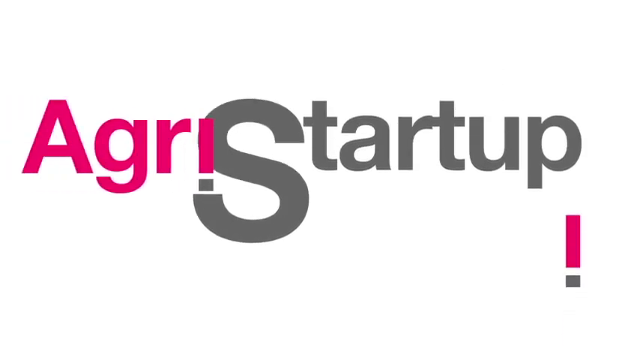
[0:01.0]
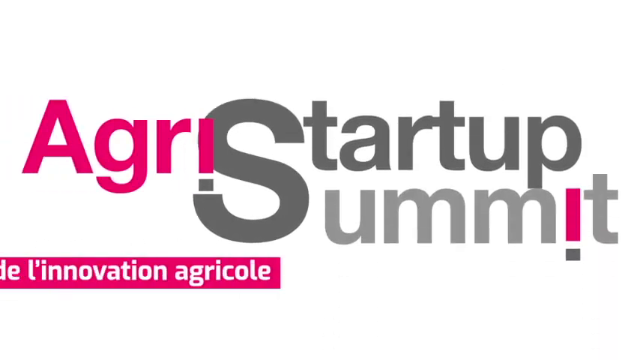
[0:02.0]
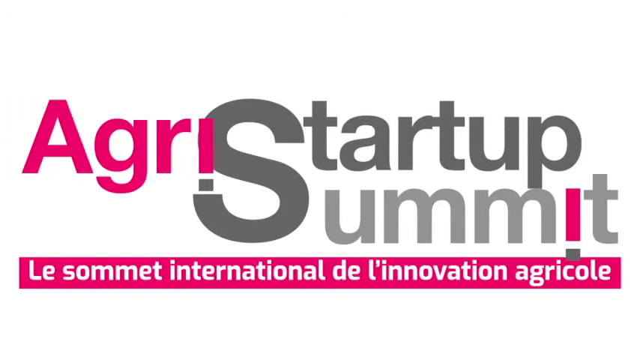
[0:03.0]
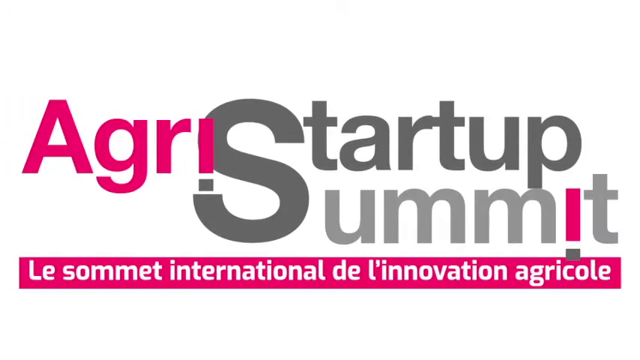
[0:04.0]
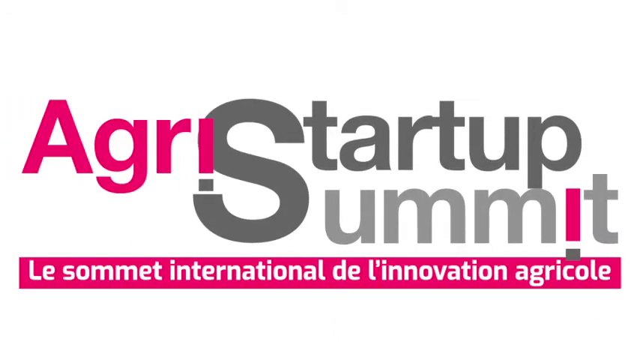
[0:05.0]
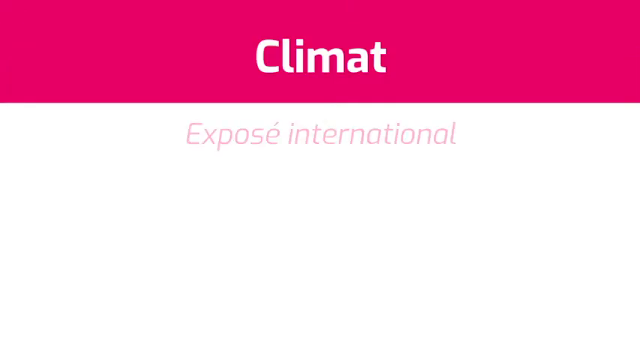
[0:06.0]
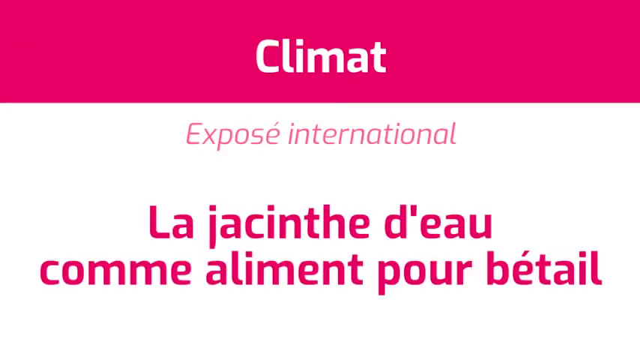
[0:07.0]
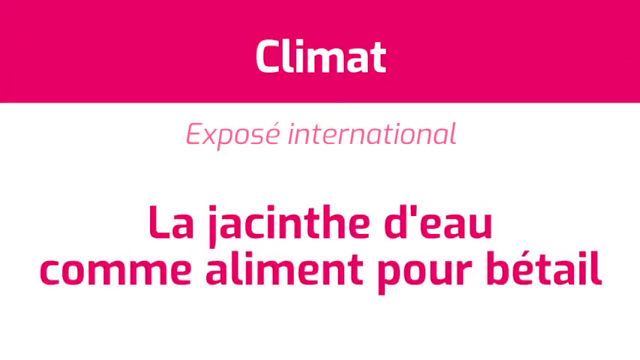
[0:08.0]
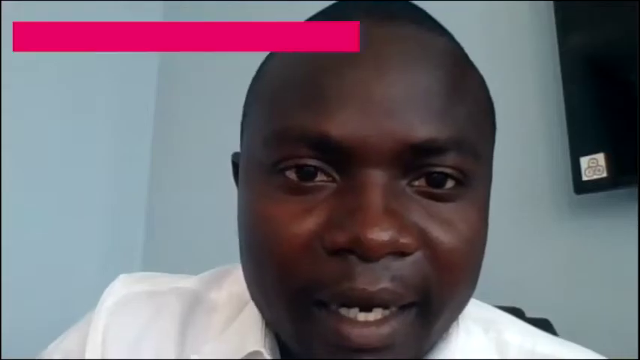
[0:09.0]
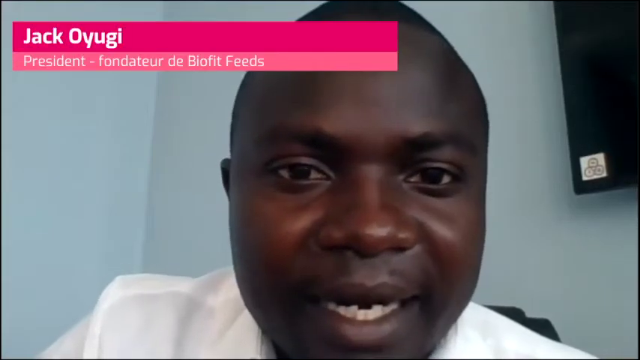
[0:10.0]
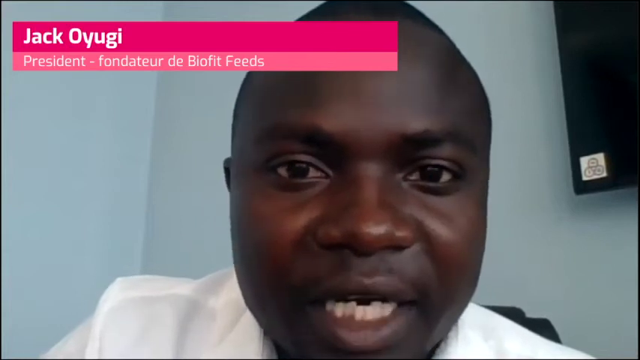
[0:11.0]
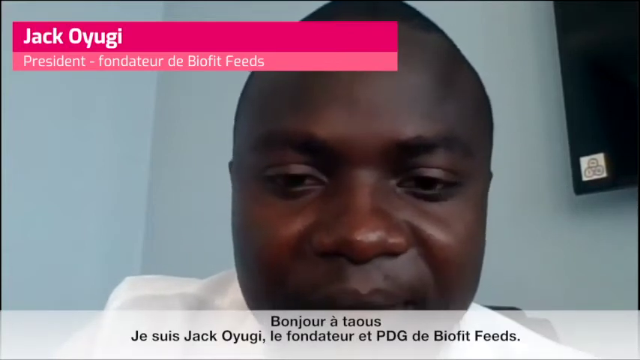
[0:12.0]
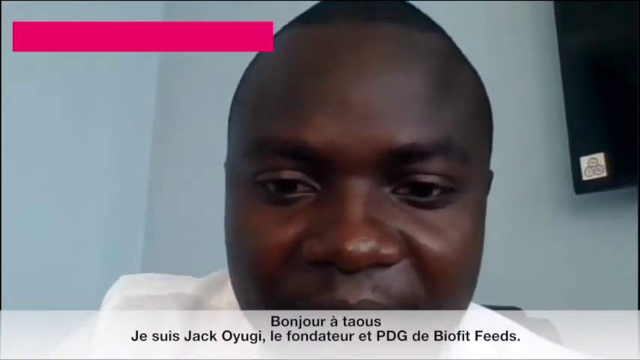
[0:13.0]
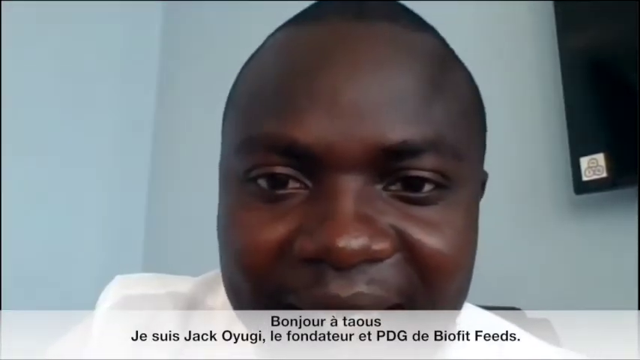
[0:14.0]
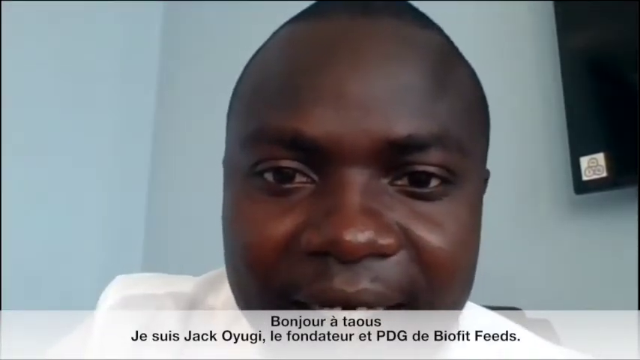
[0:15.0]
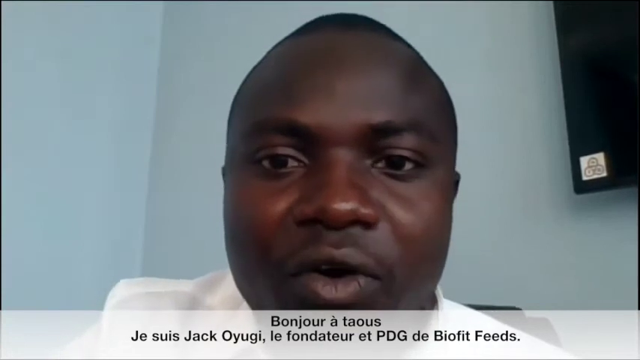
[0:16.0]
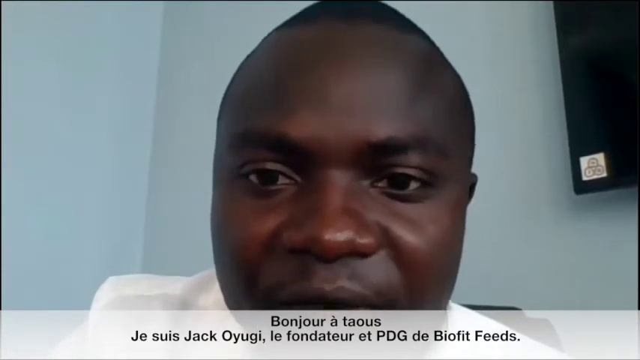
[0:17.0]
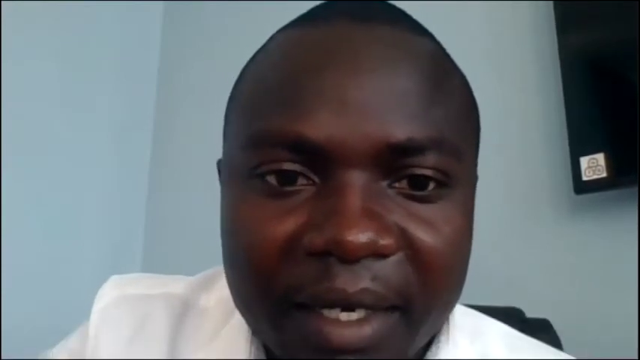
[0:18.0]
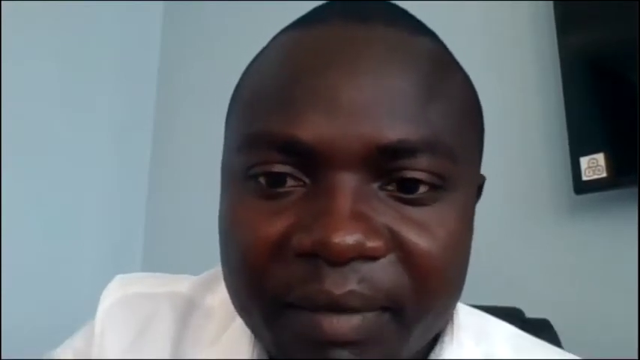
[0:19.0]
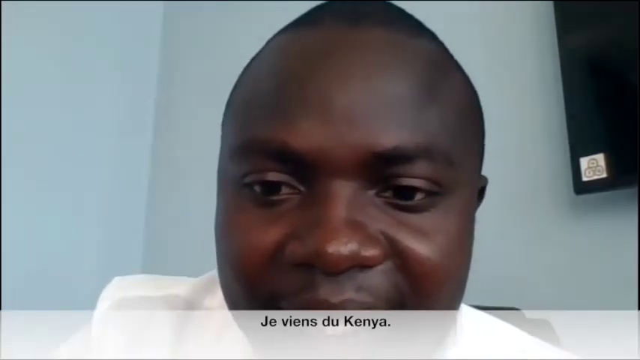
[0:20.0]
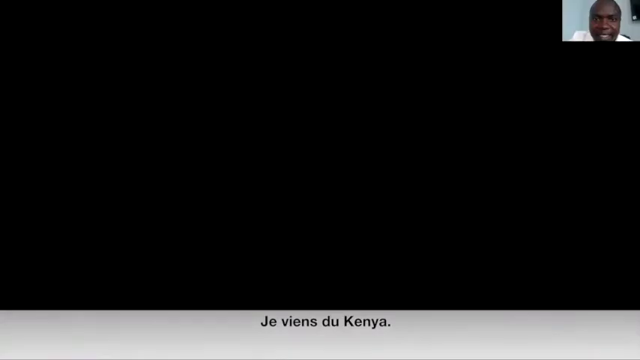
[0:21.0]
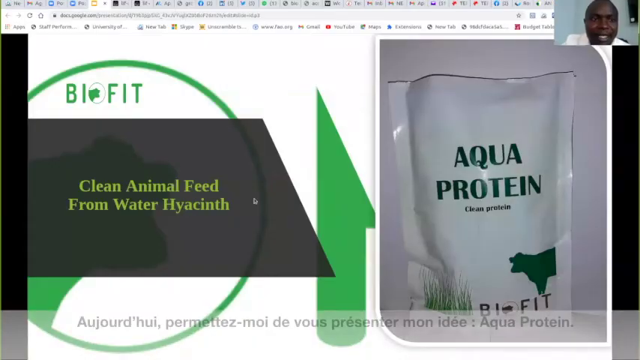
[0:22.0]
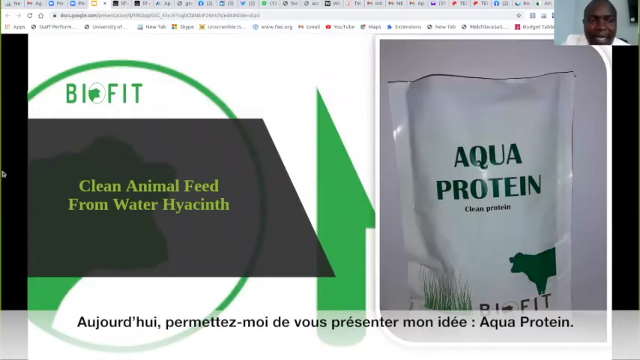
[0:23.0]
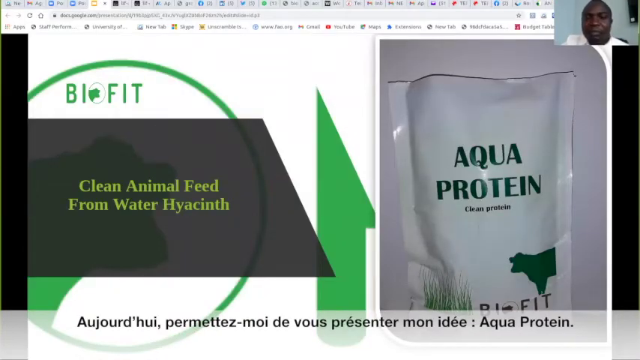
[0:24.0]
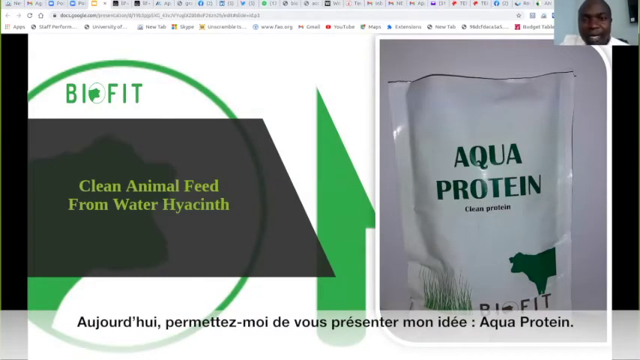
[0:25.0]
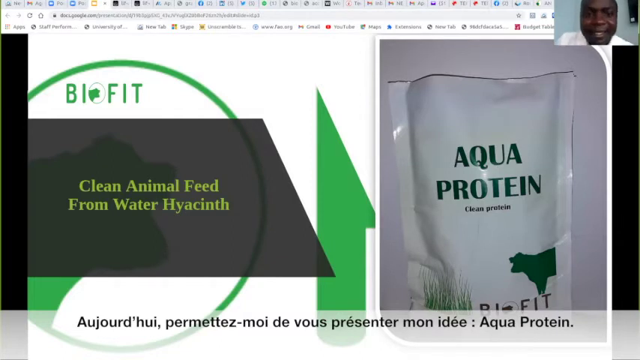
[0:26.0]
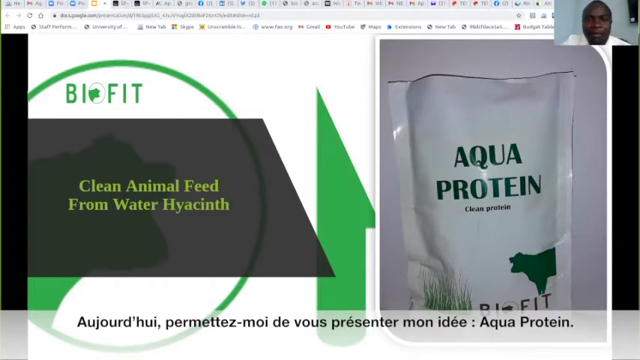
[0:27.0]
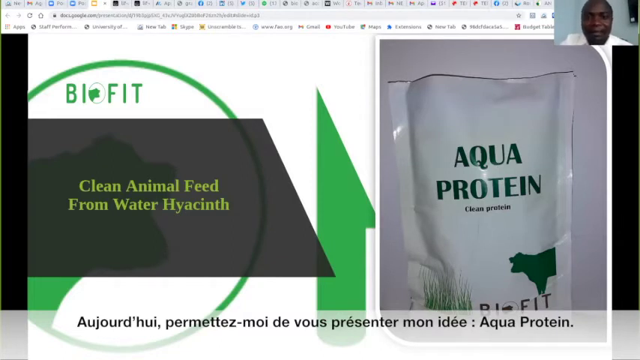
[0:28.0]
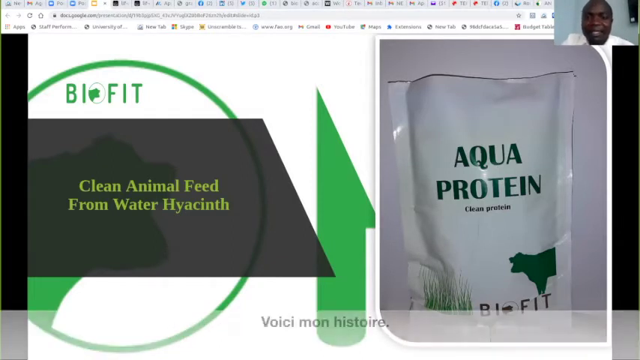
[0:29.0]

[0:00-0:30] The video opens with a bright pink intro, then moves to the president of a foundation. Text written in French relates to the climate, and then the video moves on to biofit feeds. The man appears well put together; he is the only person shown, a black man from Kenya wearing a white shirt. The background behind him is empty except for a visible TV. The biofit product is shown, with text saying "aqua protein", and he appears to go on talking about the product. The product comes in a white bag with green writing and what looks like a cow on it.